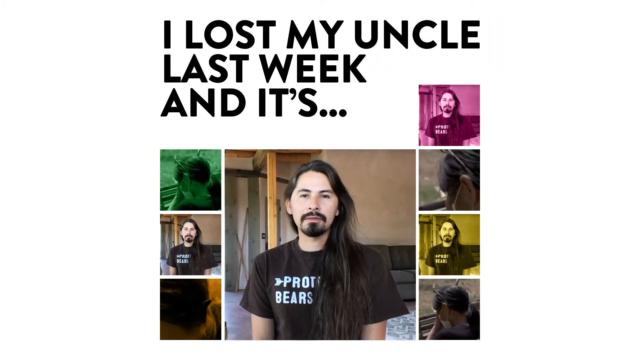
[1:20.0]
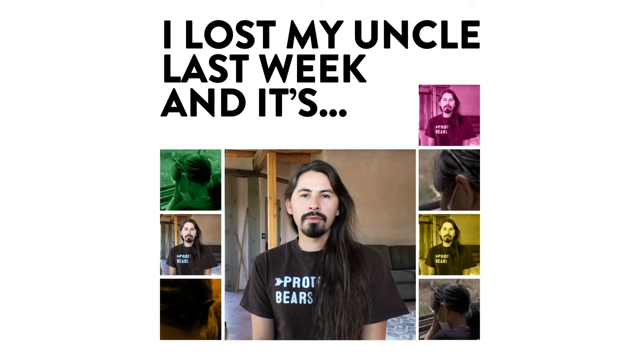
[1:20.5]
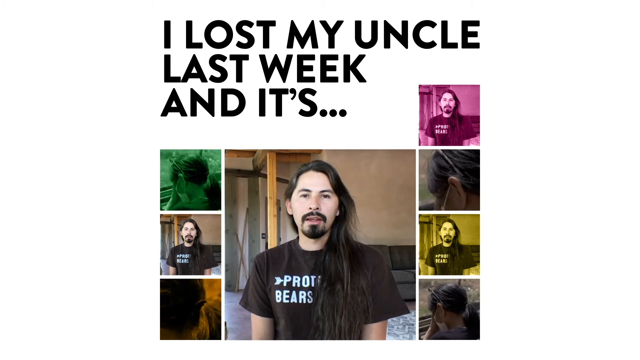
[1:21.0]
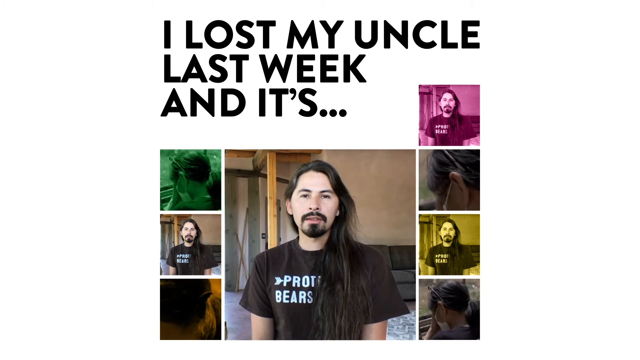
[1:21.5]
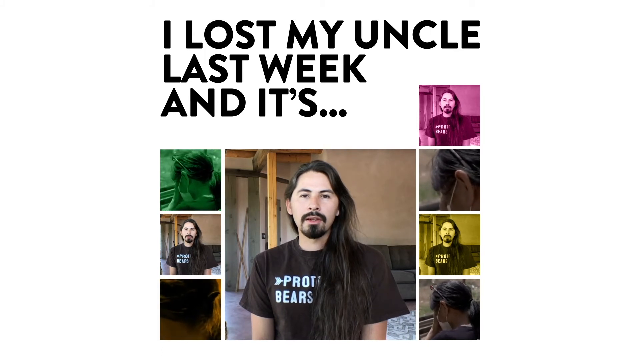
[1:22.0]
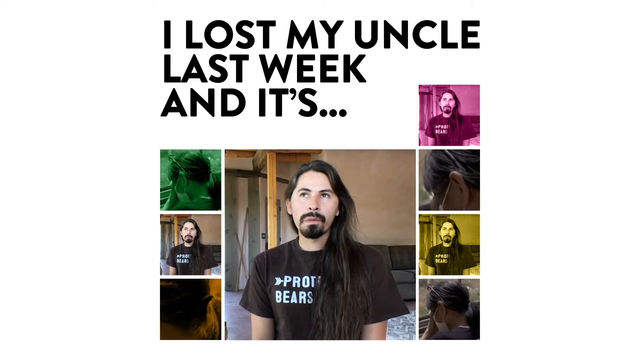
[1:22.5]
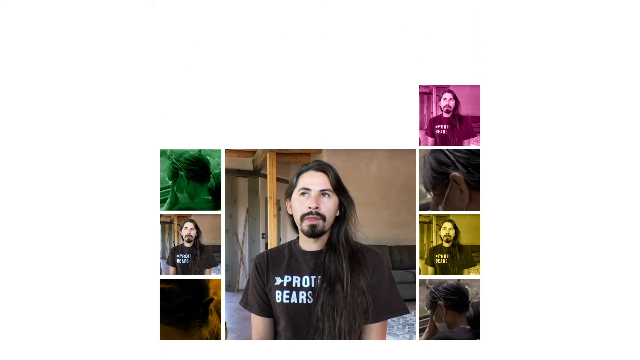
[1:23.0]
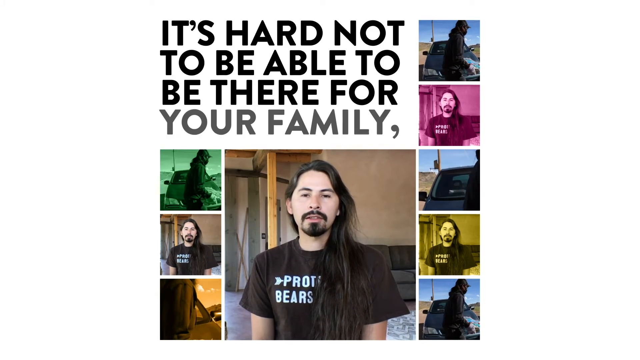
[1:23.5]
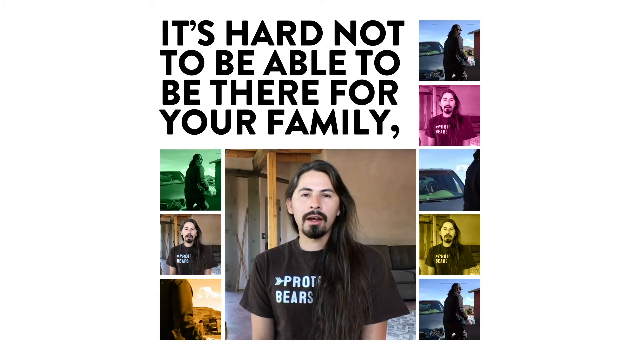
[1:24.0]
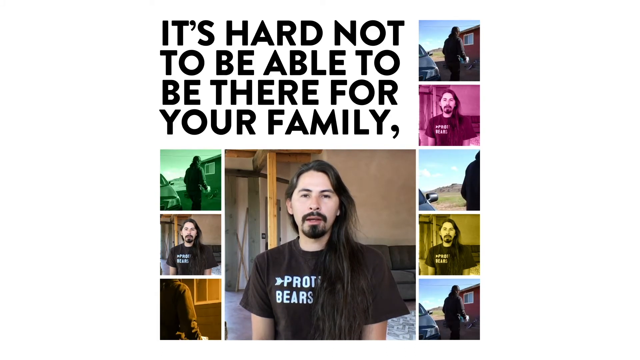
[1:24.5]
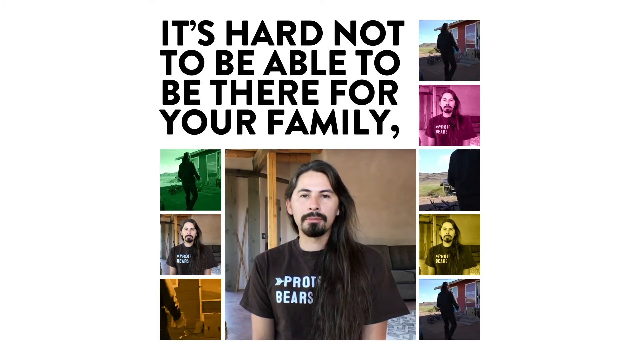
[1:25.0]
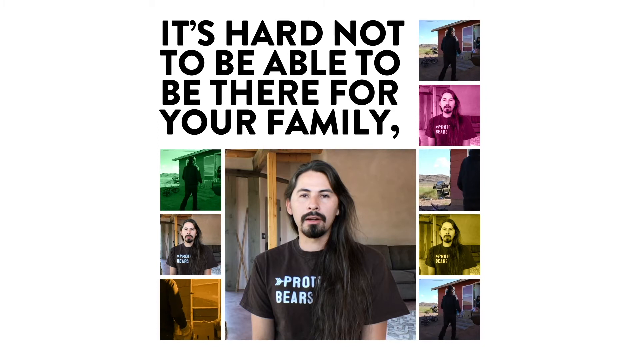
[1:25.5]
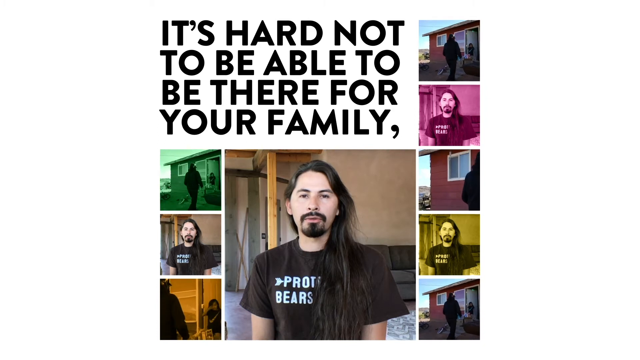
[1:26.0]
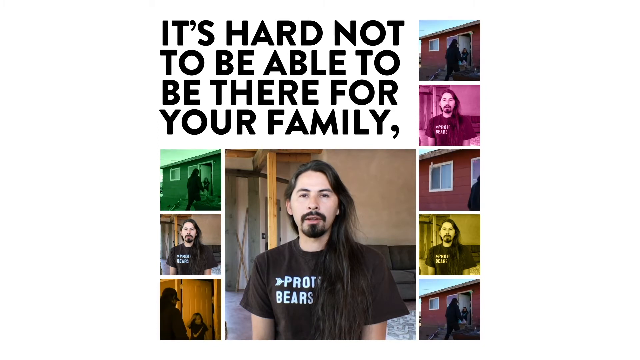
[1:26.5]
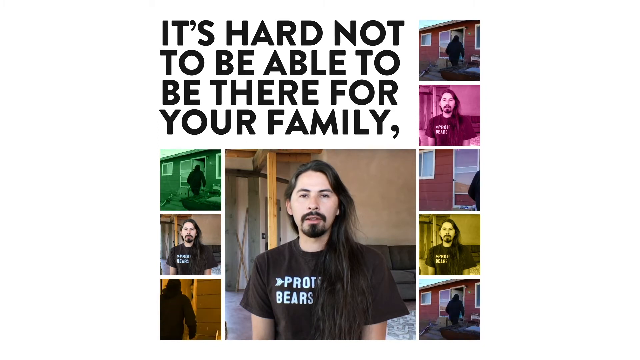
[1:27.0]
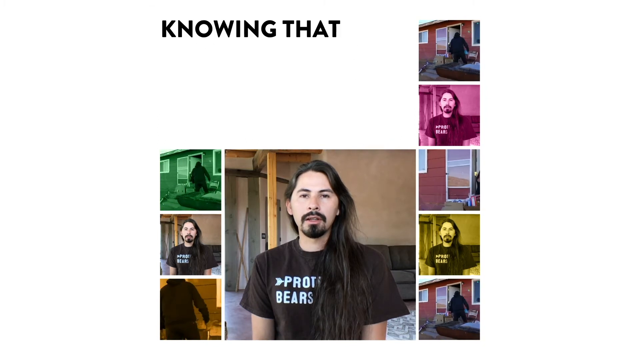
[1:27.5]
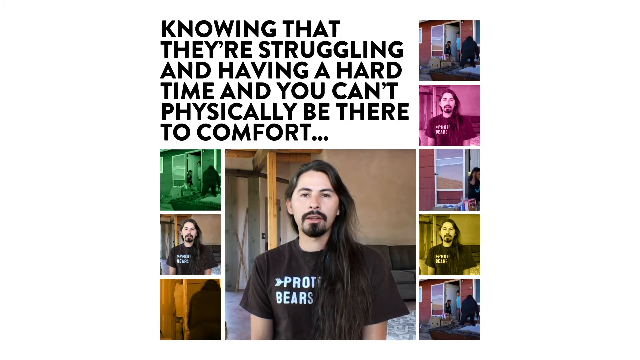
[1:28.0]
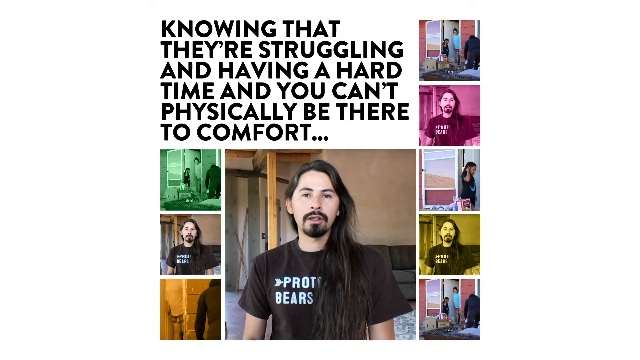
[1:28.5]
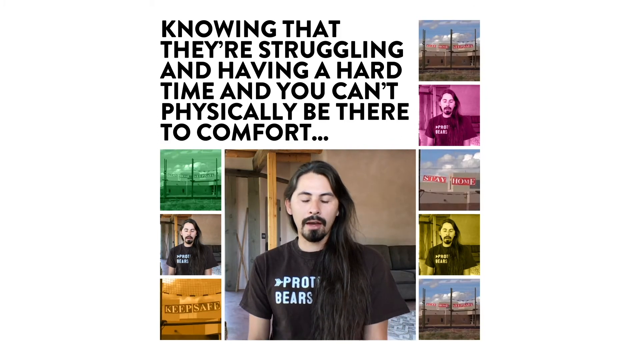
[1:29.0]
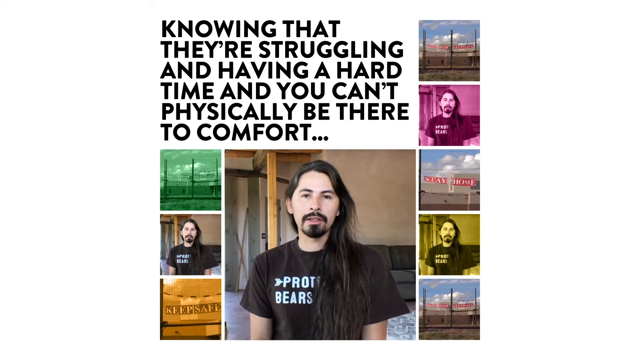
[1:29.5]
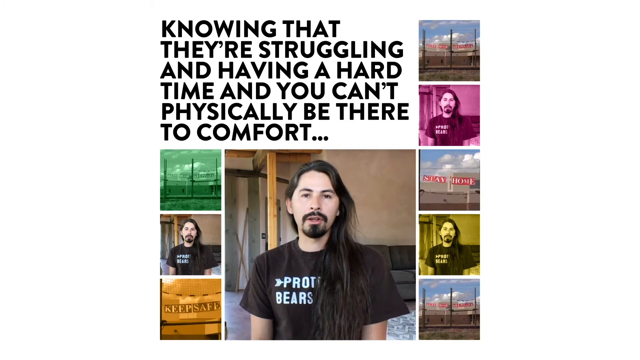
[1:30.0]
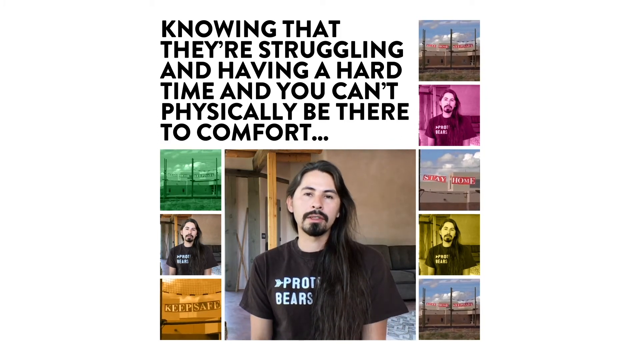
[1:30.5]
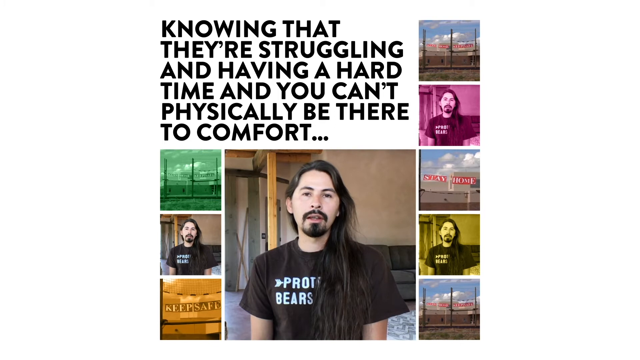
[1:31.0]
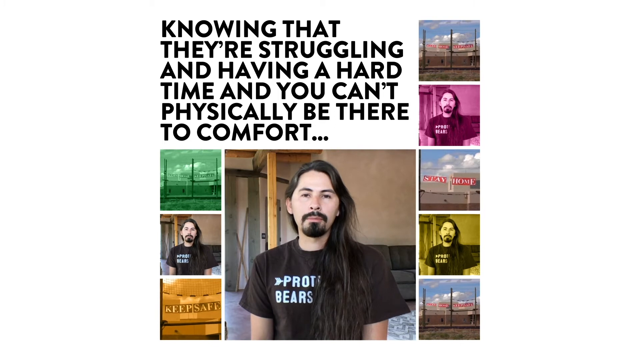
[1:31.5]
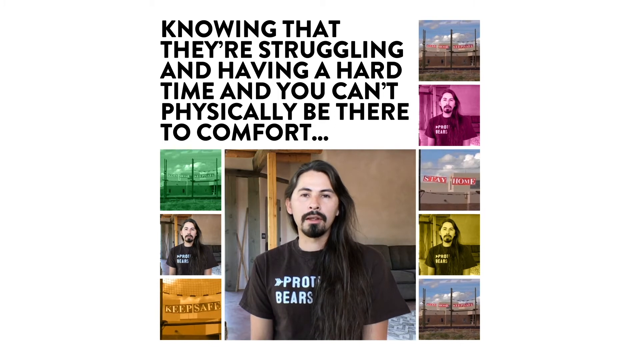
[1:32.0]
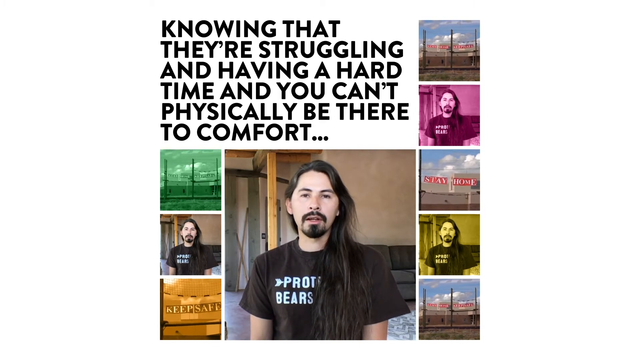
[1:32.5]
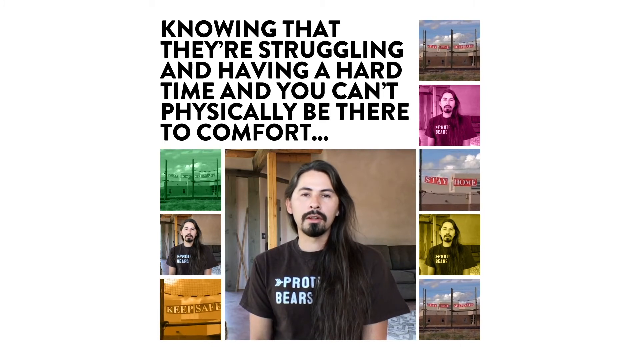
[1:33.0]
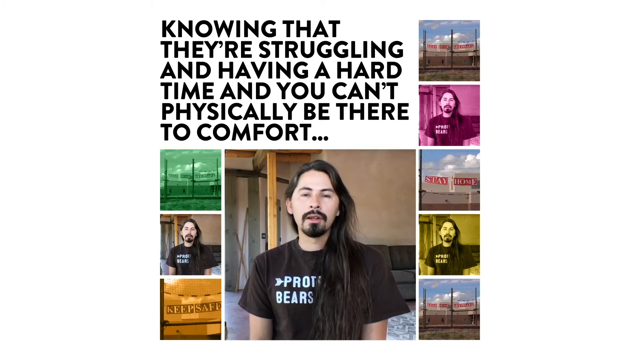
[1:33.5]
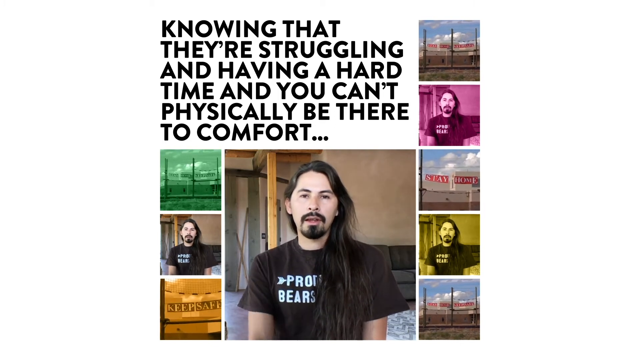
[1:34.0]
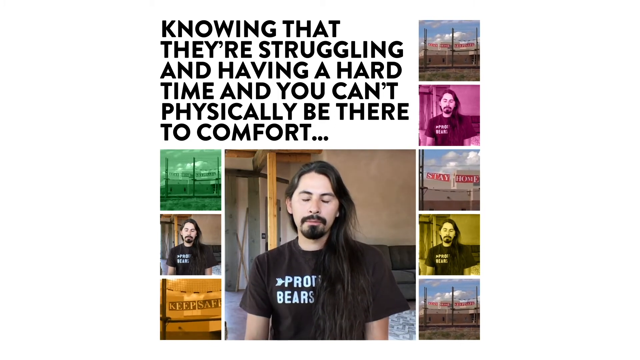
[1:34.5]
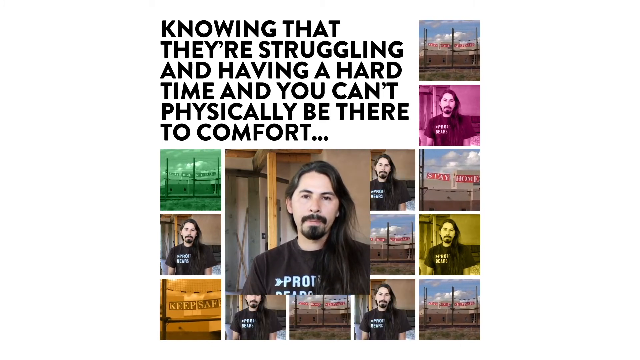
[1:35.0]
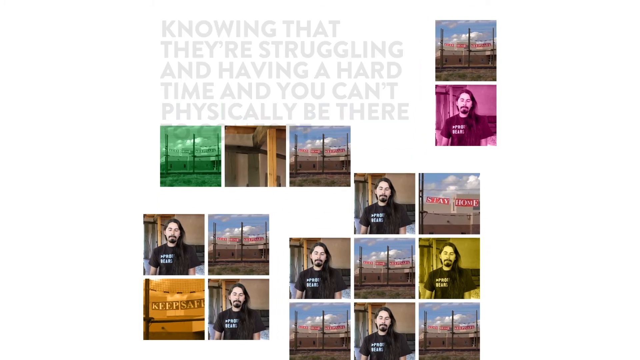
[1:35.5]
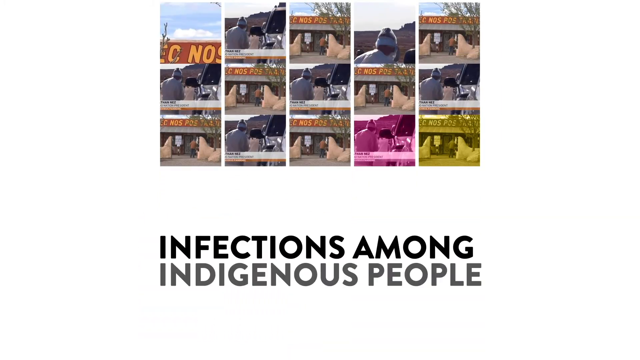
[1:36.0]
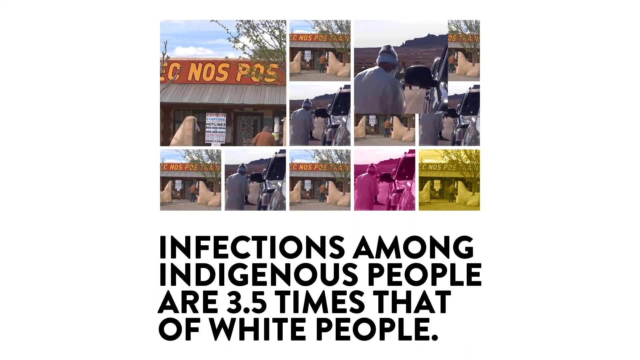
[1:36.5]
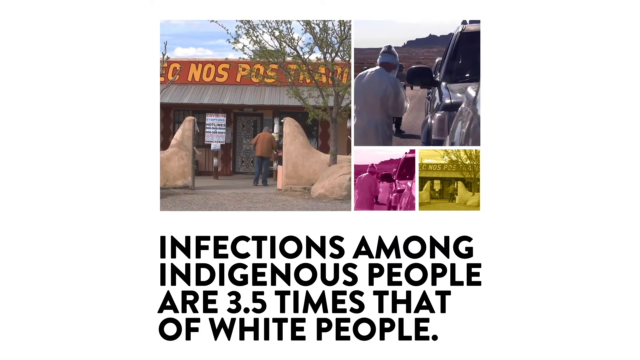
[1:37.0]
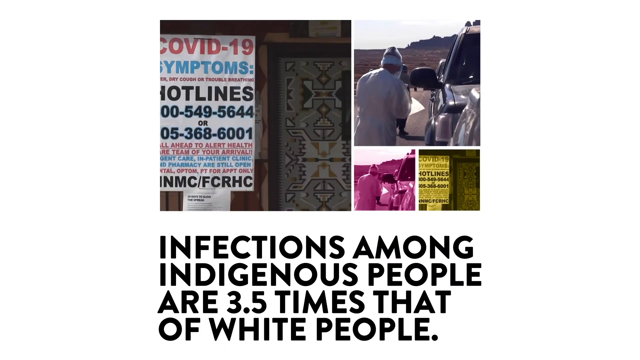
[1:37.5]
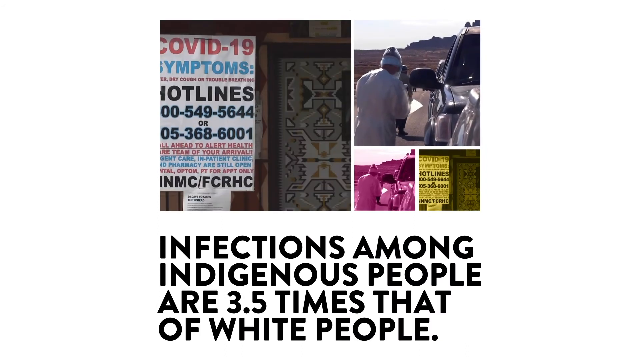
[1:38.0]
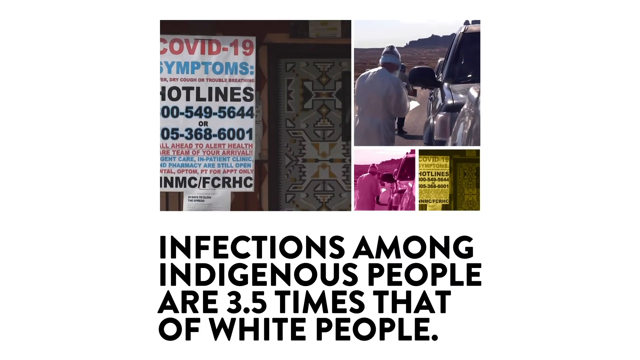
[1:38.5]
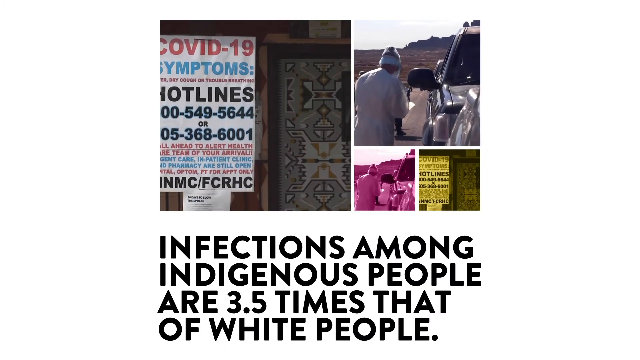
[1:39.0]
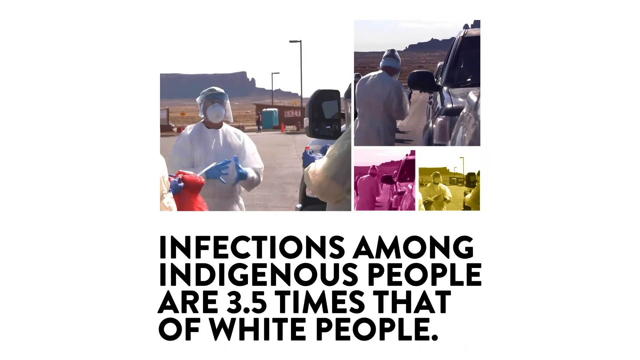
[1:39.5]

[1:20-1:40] A man named Theo is shown talking, with a background that is probably an area where his people are located. Something, possibly a business, appears to be closed down. A man in a full hazmat suit is shown, probably performing COVID tests. A sign shows COVID symptoms and 1-800 numbers. A series of pictures in different colors shows the area and him, then cars in an area where COVID testing was done.